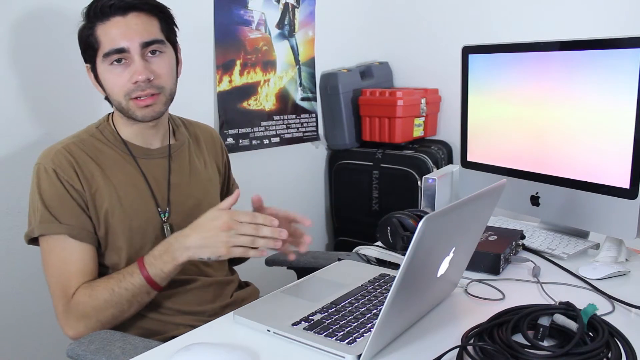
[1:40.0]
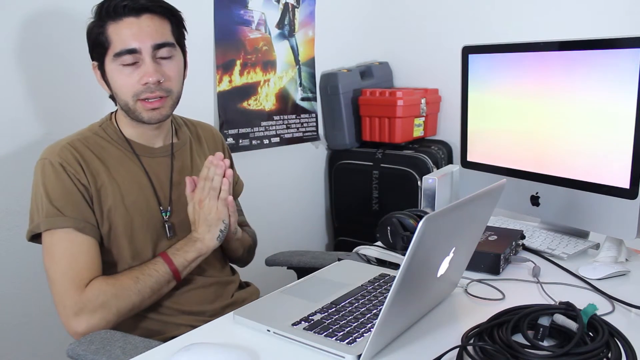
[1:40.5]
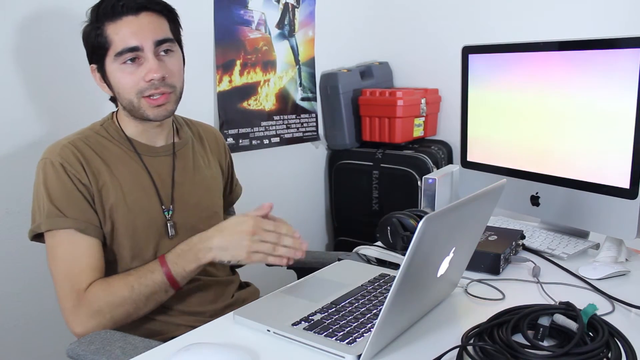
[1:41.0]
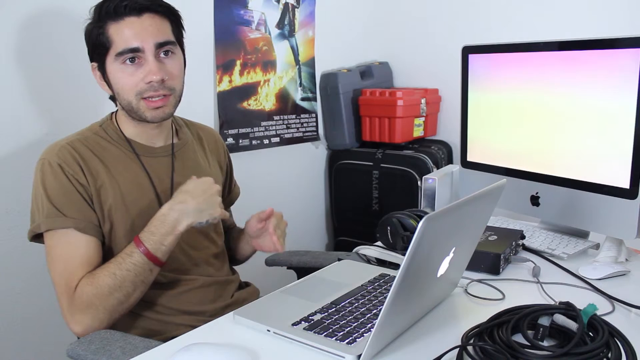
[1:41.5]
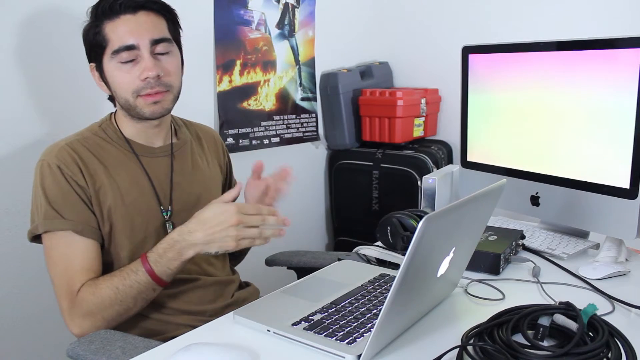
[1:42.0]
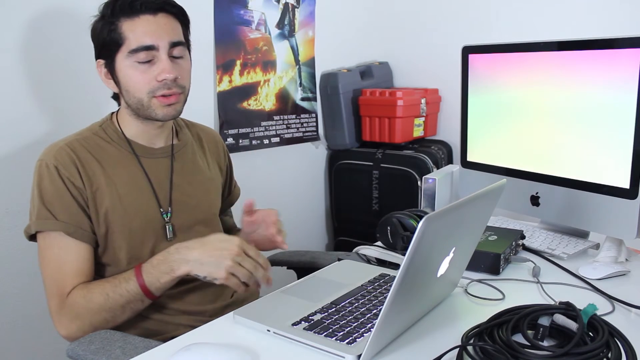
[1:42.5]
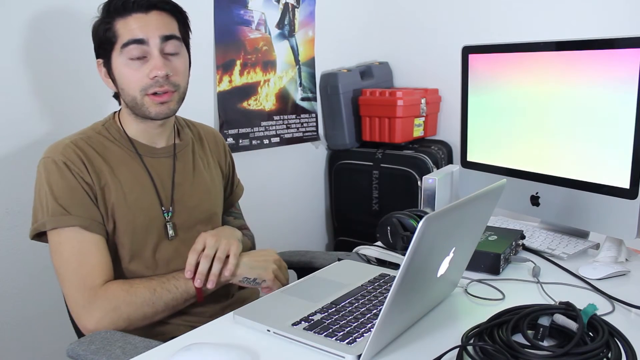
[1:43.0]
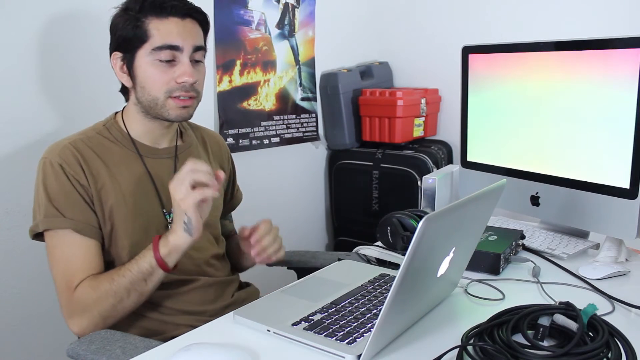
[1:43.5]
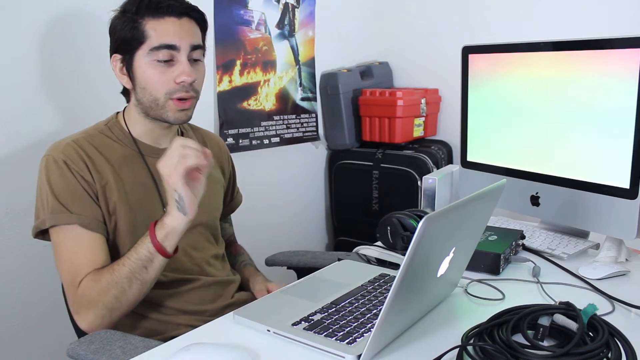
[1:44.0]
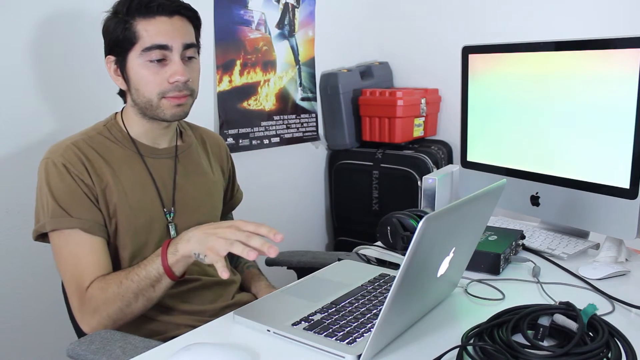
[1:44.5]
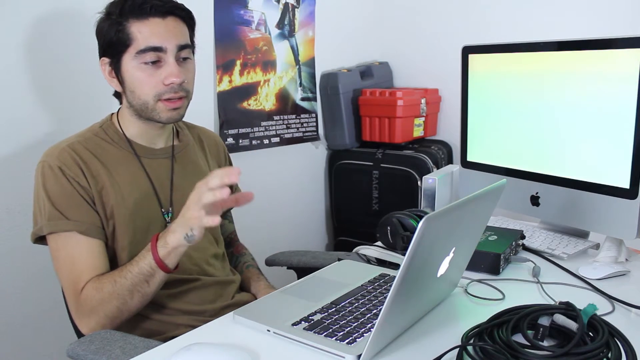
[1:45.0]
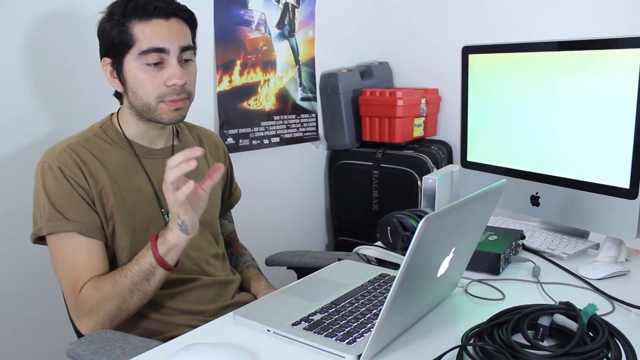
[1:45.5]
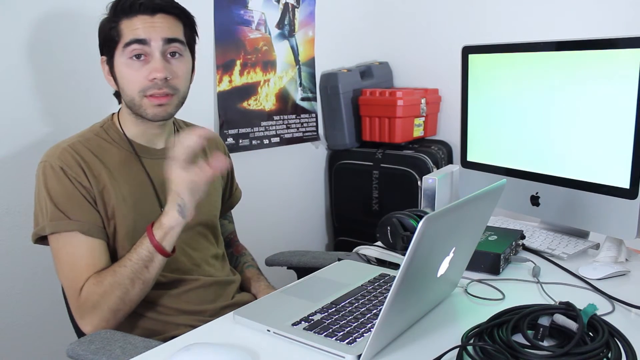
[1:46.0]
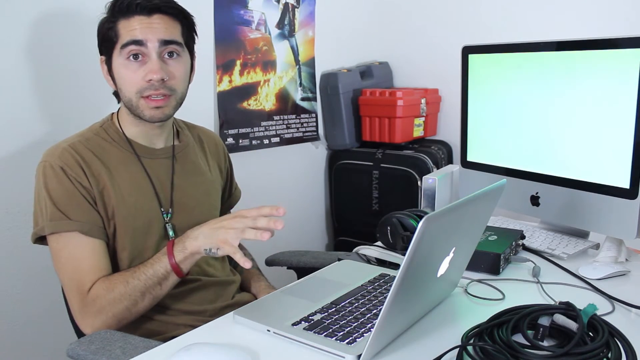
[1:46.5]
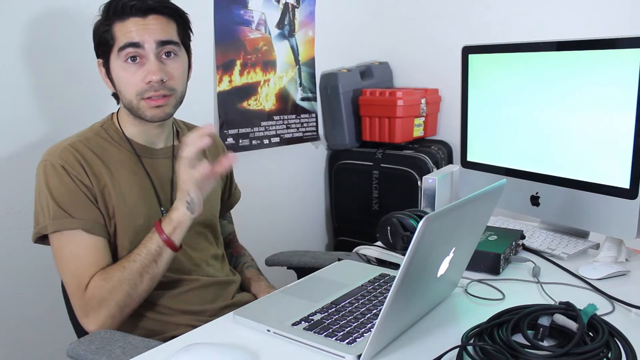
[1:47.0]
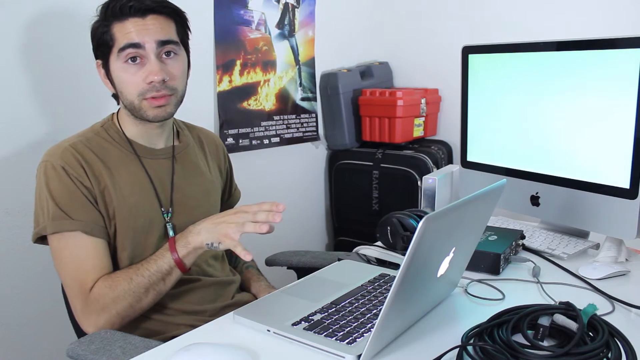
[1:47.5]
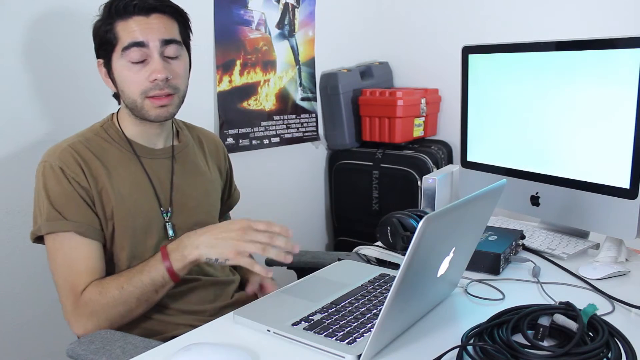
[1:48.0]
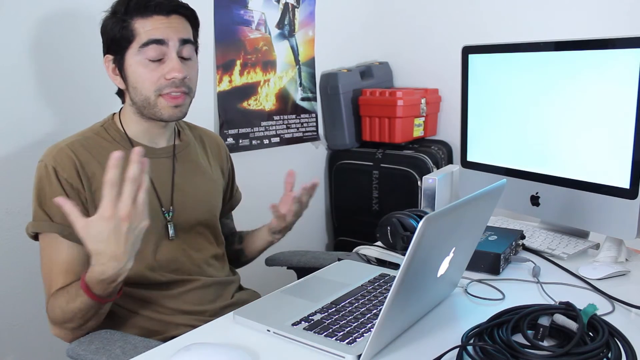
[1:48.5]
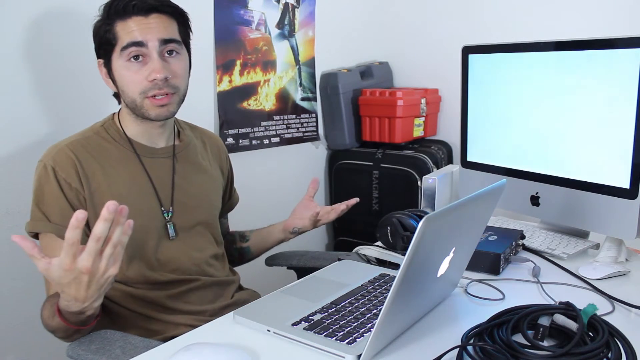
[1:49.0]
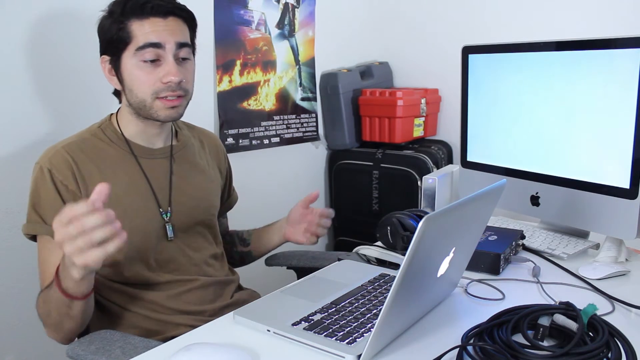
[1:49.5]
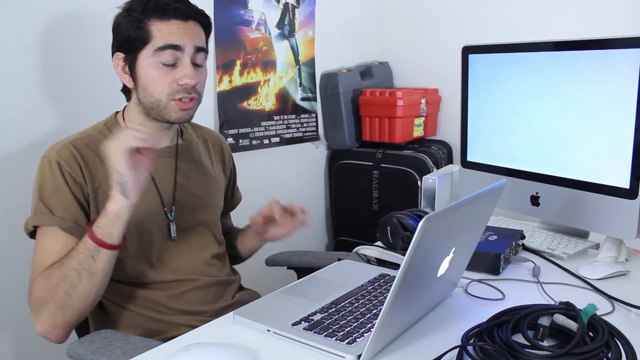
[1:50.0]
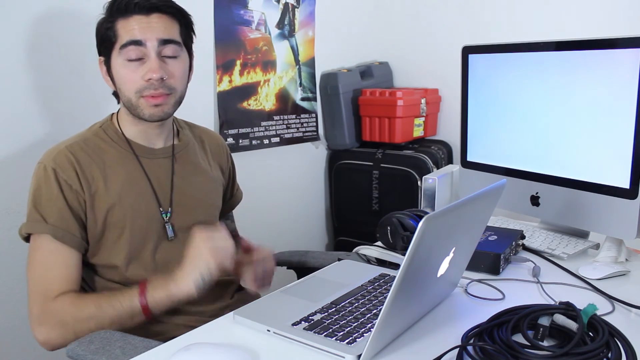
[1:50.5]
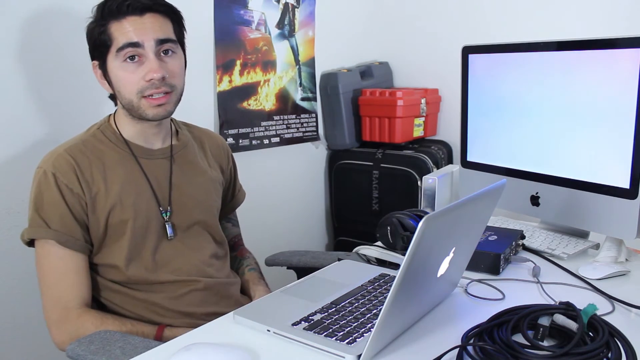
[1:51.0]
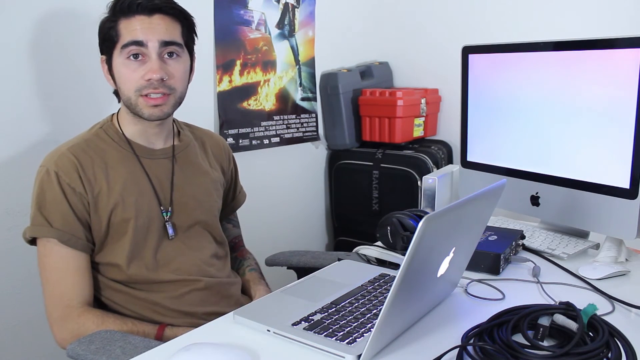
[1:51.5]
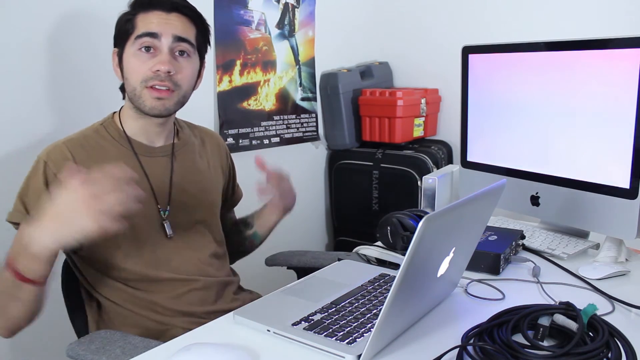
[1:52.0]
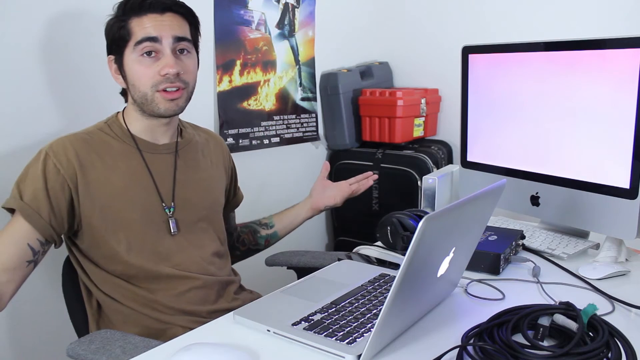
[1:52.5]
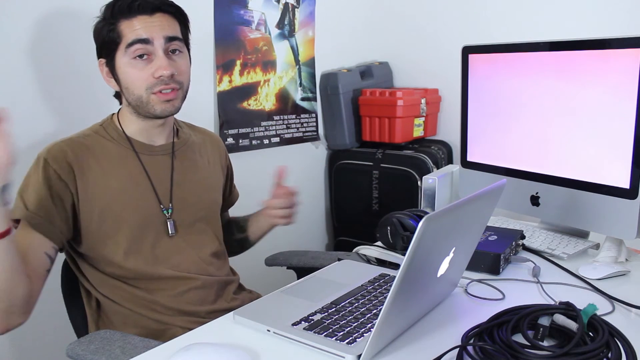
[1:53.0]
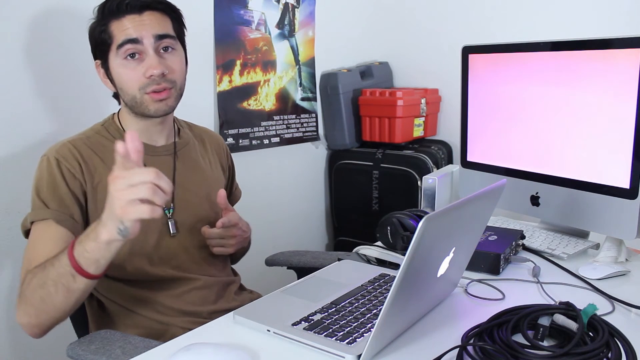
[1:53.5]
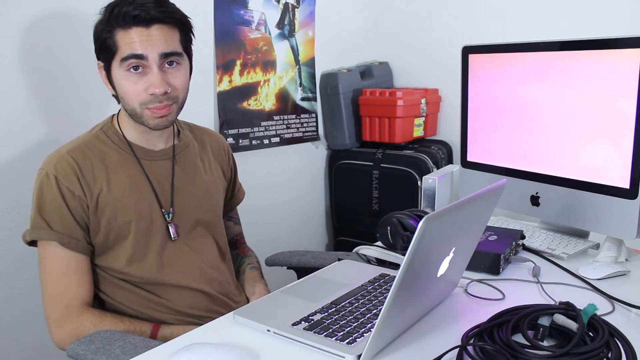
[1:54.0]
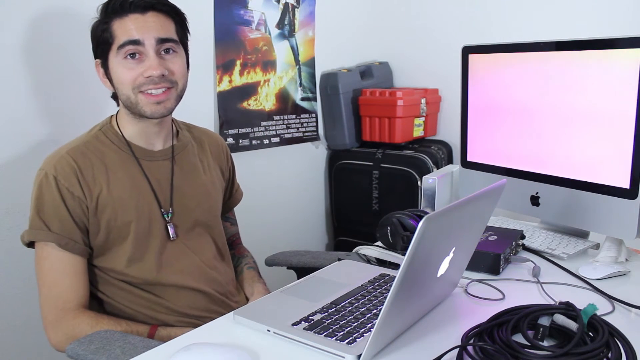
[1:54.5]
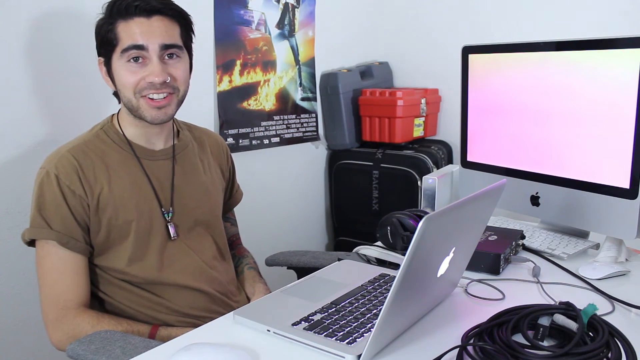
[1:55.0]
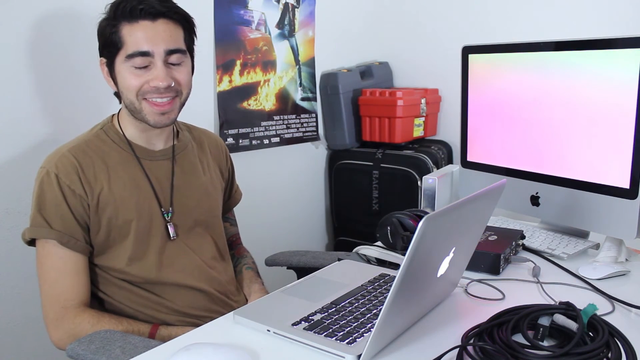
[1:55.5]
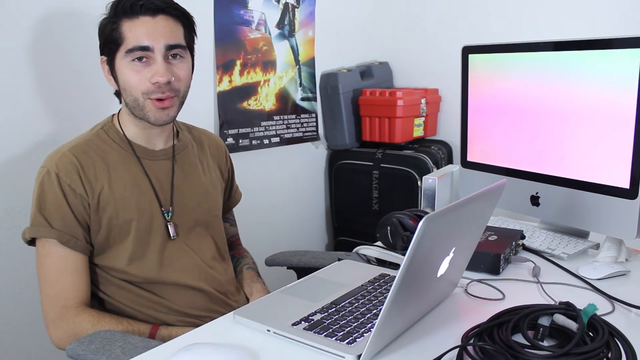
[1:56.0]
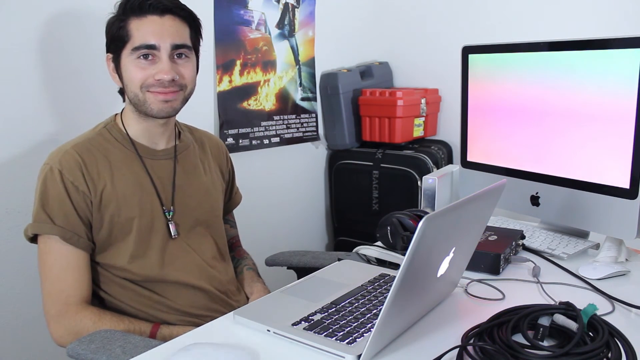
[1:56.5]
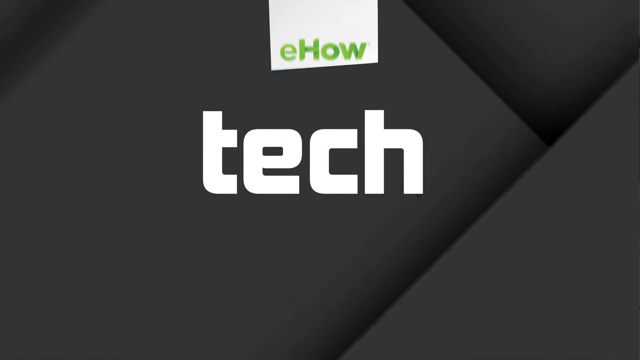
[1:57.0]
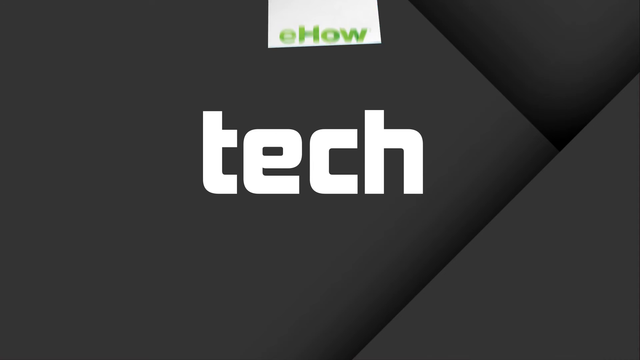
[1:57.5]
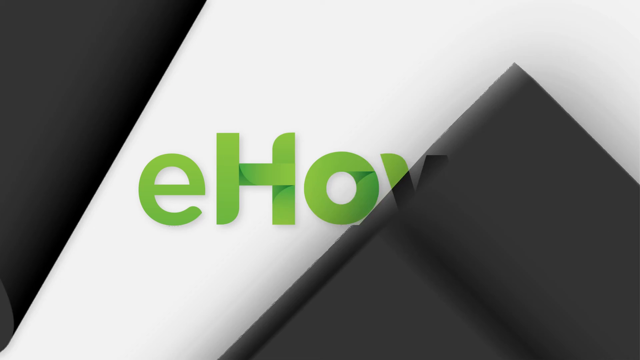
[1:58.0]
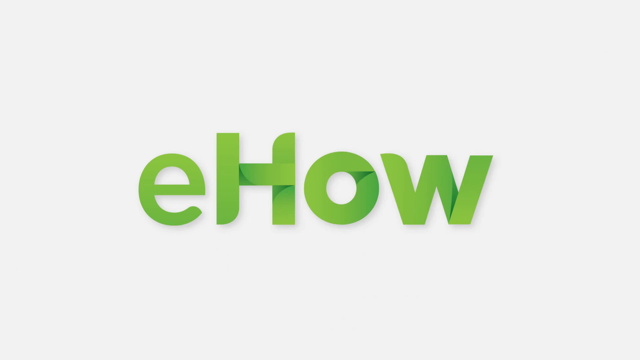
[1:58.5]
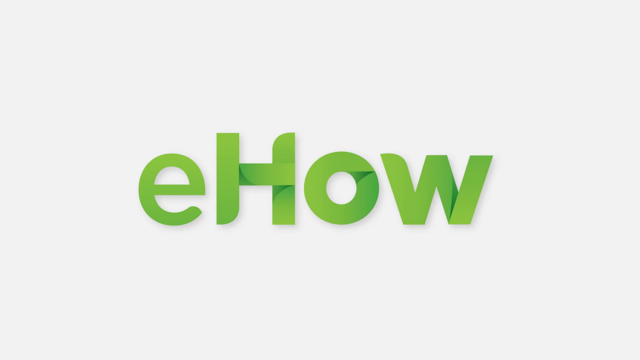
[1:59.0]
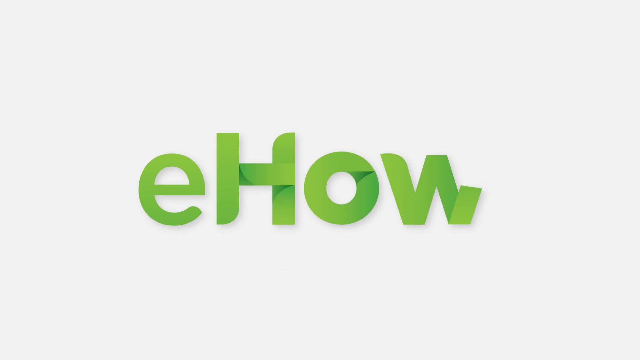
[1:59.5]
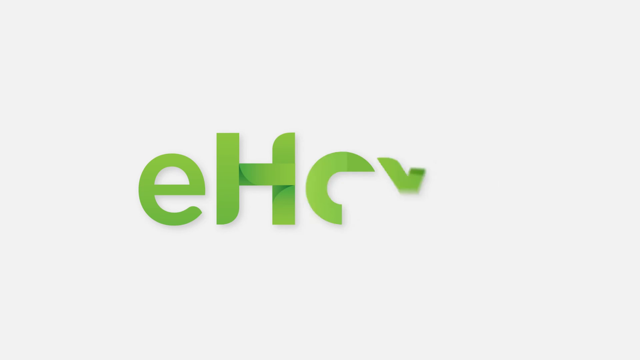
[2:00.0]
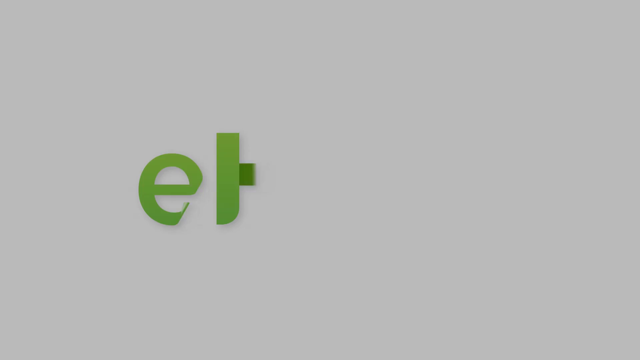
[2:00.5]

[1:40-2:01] The man has short hair and thick eyebrows and wears a necklace with a black rope and a dog tag, and a brown shirt; his right arm has a red band around it. A Back to the Future poster is in the back. To the right is some sort of luggage, a large black bag, and to the very right is an iMac. A screen is on, and a MacBook is in front of him. His hands are clasped together or pressing against each other with fingers spread; he kind of tilts them forward and moves them apart. His right hand has its fingers curled towards him and his left hand has its fingers in front of him, then his hands kind of roll around each other towards him. He extends his hands forward; his left hand touches his right band while his right hand is stretched forward, its fingers kind of going backwards and throwing forward. He keeps gesturing, and his right hand forms something like a closed fist and then points.